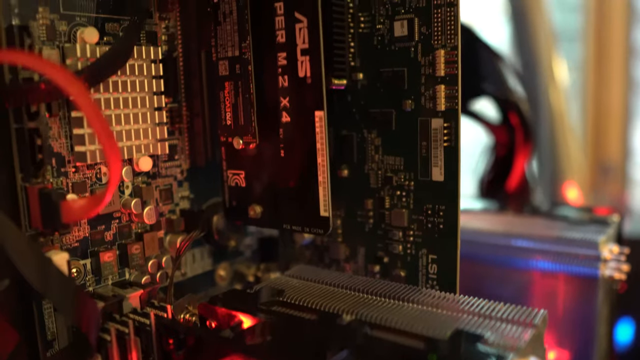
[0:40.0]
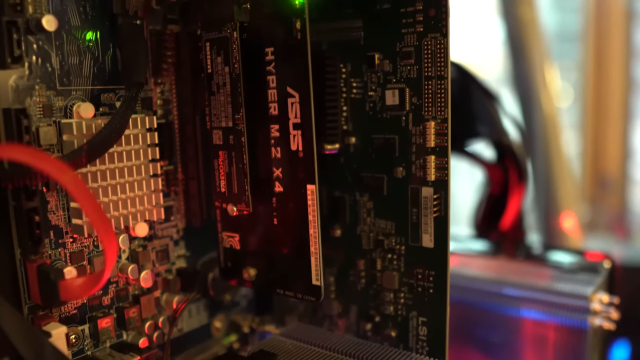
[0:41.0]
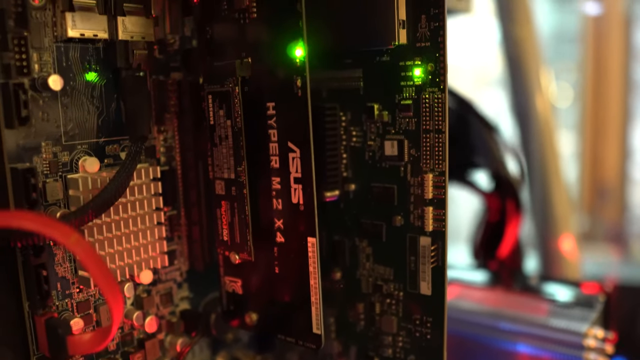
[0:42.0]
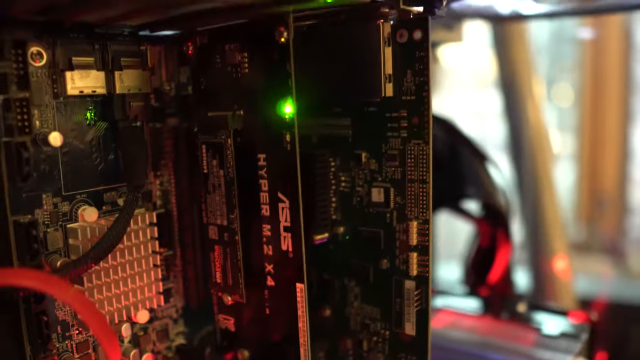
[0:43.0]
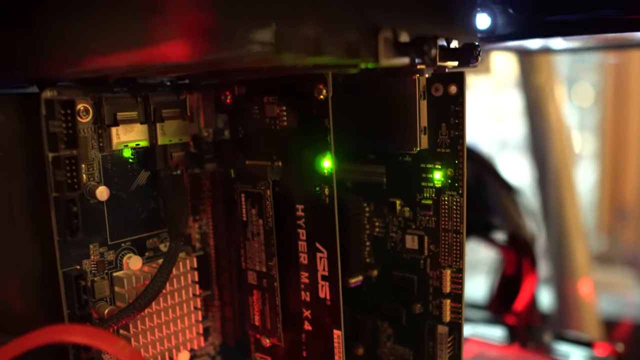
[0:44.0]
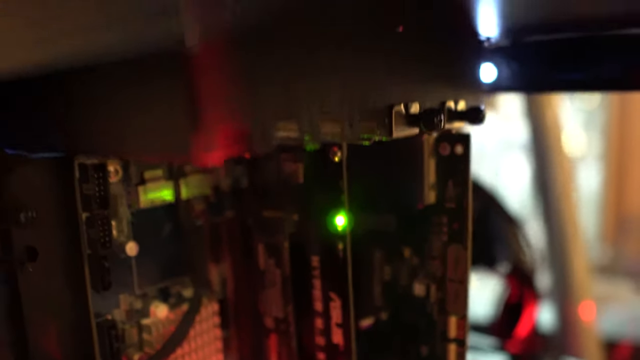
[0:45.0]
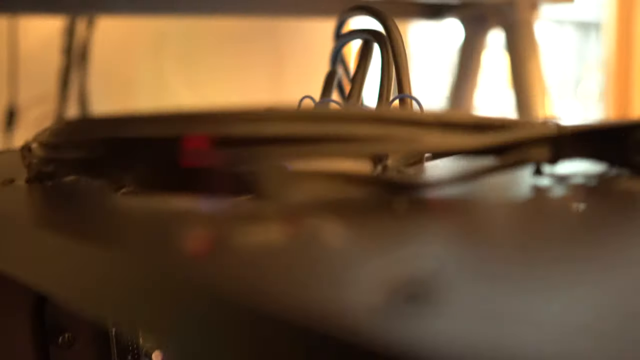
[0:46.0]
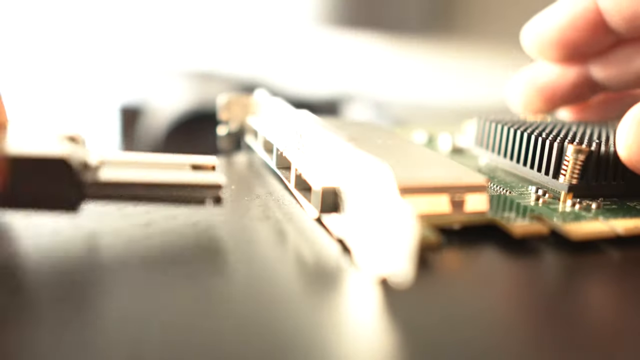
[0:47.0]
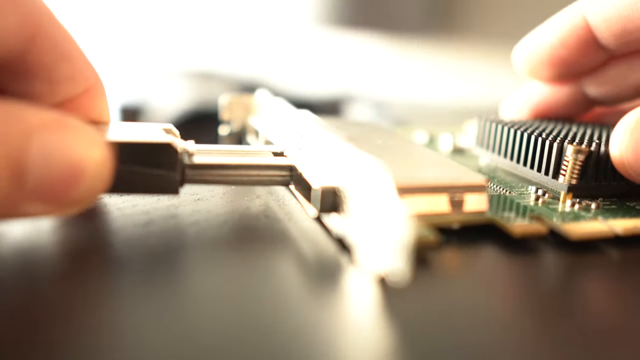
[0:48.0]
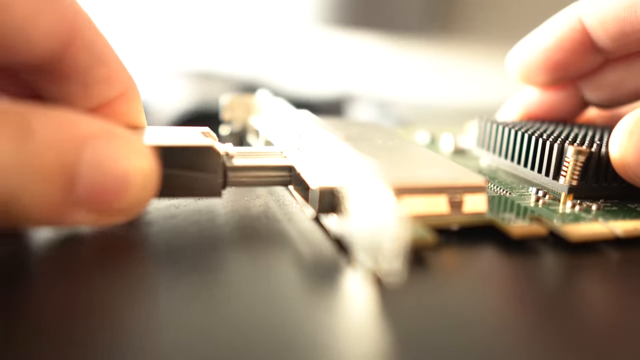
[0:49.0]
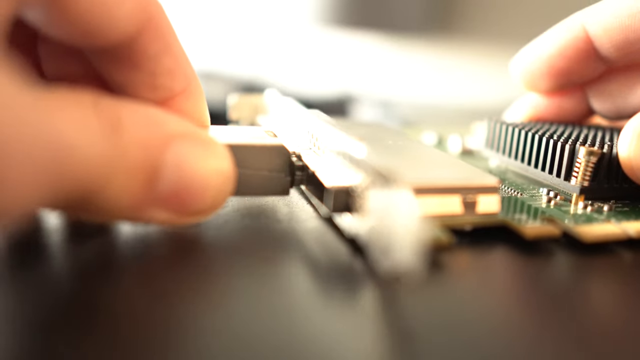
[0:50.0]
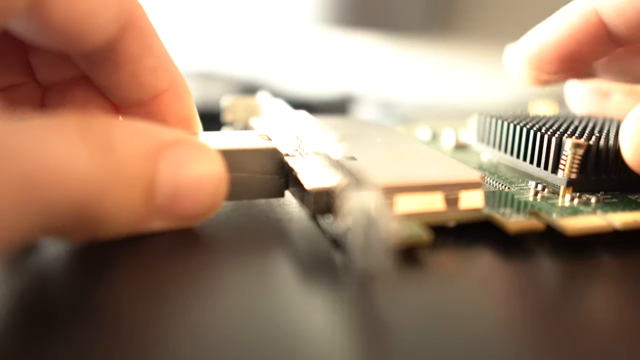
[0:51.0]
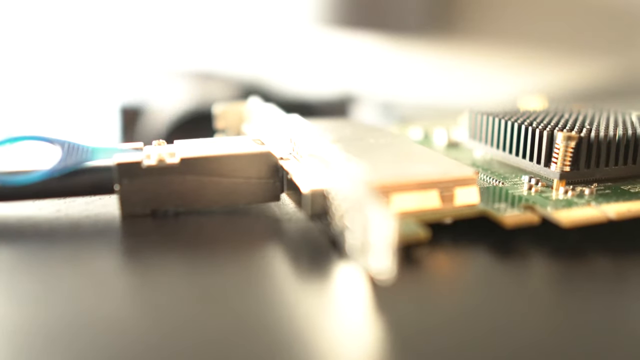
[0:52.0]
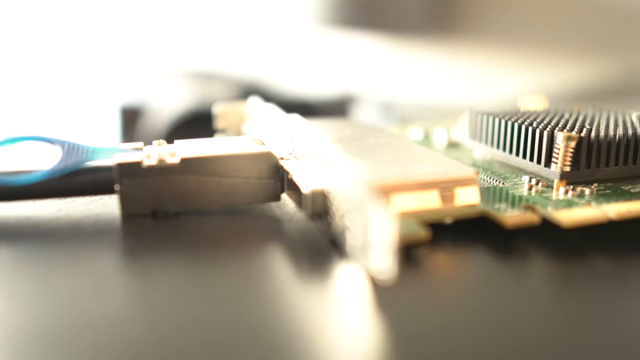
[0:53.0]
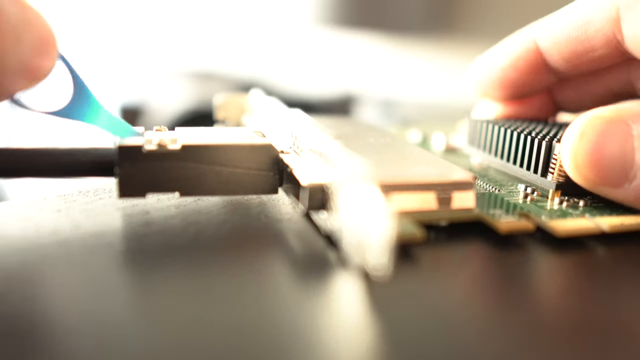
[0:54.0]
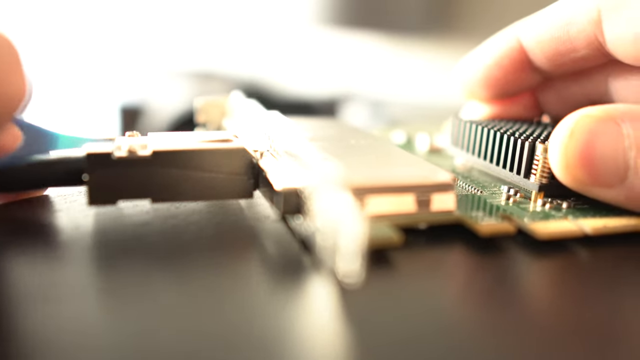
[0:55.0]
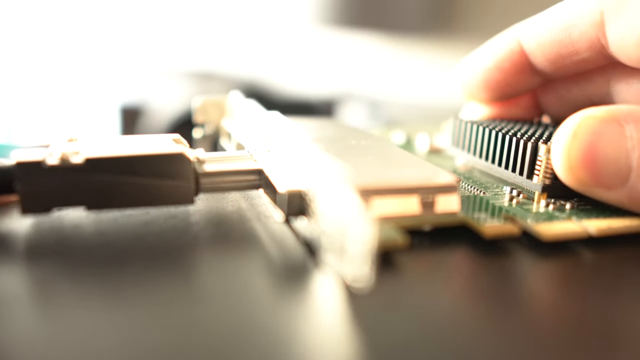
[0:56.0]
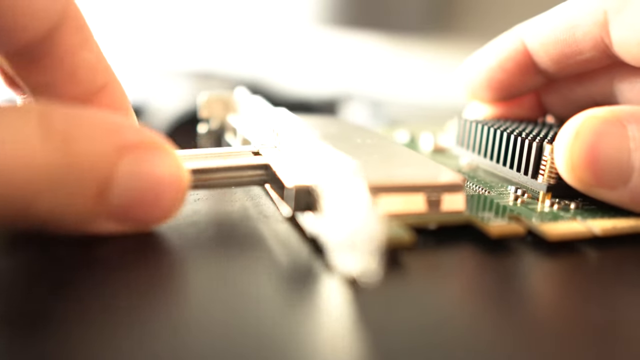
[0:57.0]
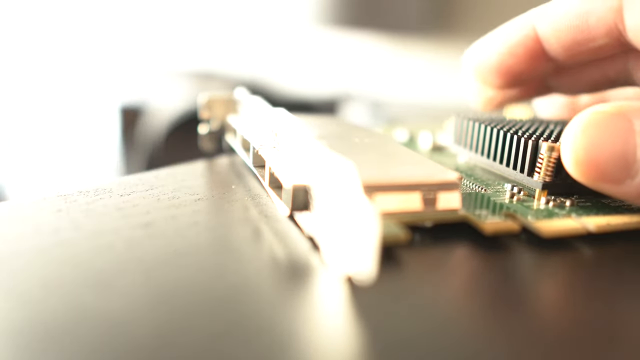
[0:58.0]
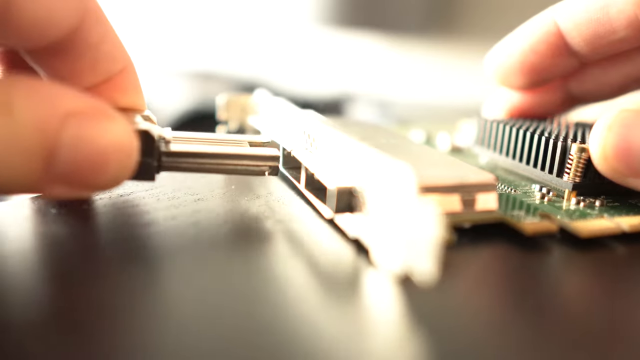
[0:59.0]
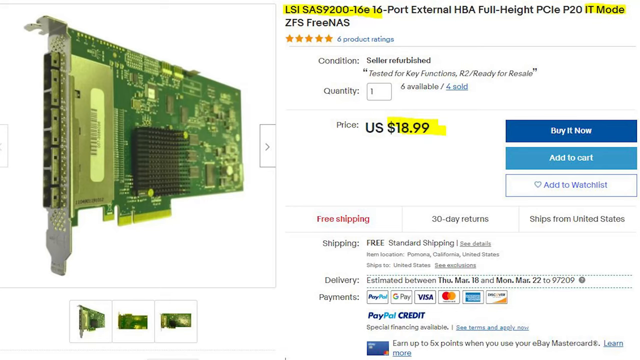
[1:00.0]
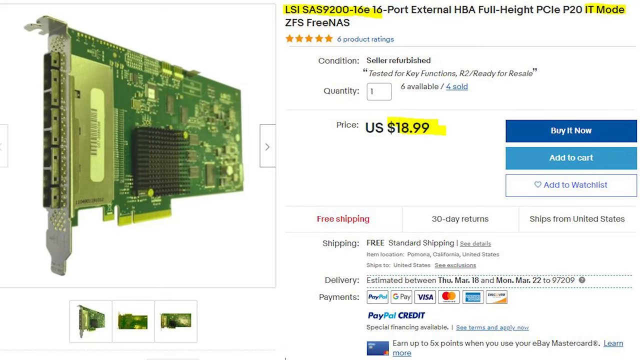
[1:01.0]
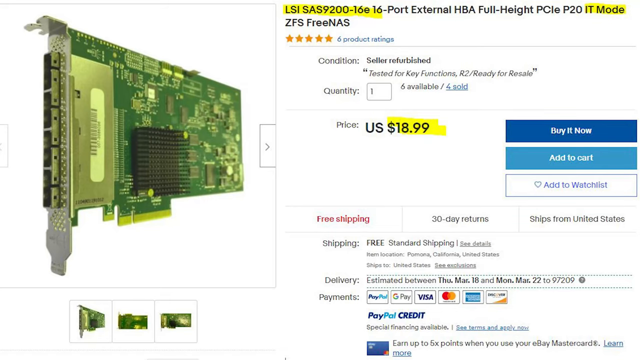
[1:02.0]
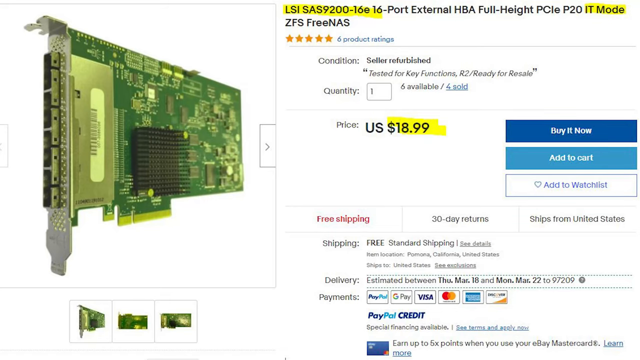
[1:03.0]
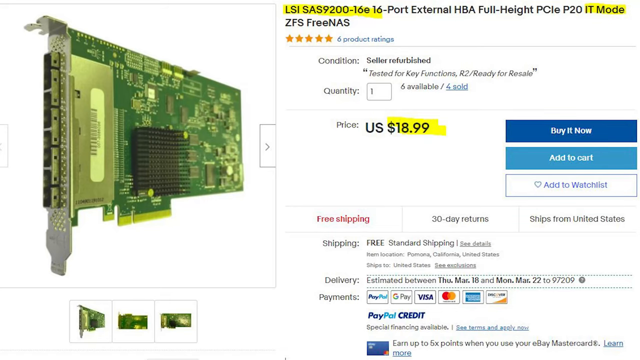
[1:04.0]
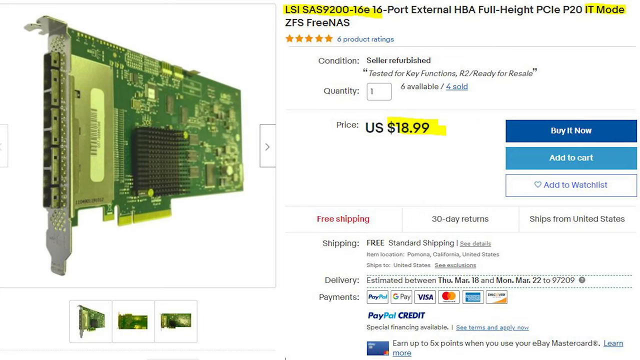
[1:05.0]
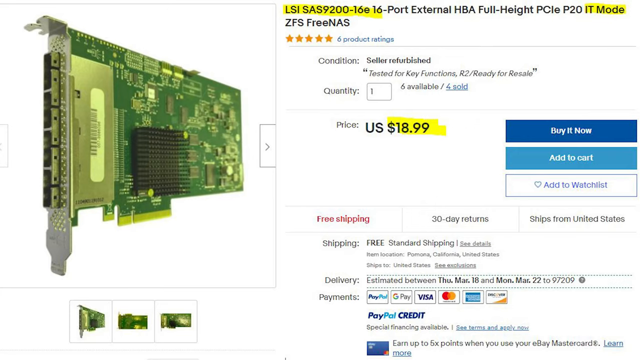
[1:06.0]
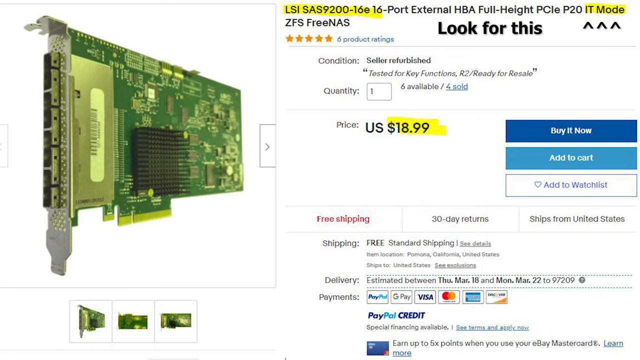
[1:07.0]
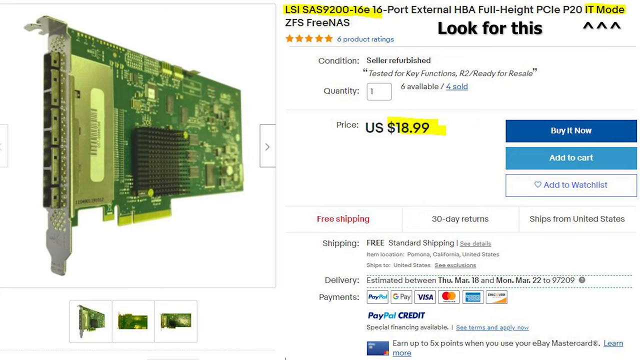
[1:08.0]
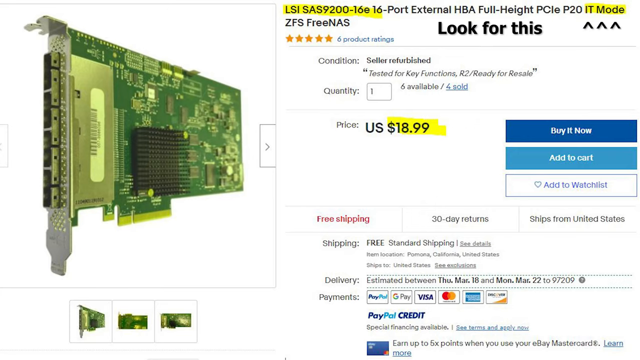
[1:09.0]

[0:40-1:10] The motherboard appears to be inserted into the back of the machine. Once it is inside, a glowing bright green light blinks, with a few red lights in the background. A couple of different blinking green lights are visible as the view pans to look directly over the desk, underneath the computer screen. Next, what appears to be a USB port is shown, and a person's fingers hold an item and insert it into the port of the motherboard, highlighted by bright sunlight coming down. Once it is inserted, the lights light up and it is activated. The video then shows how easily it is removed by pulling it in and out, and then presents an option to buy it.